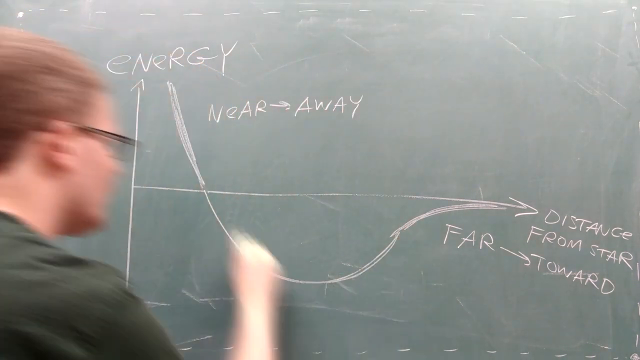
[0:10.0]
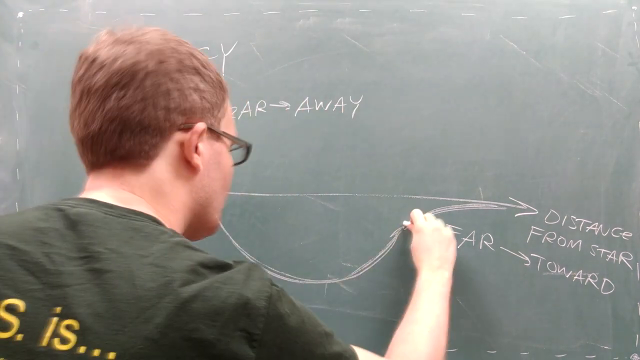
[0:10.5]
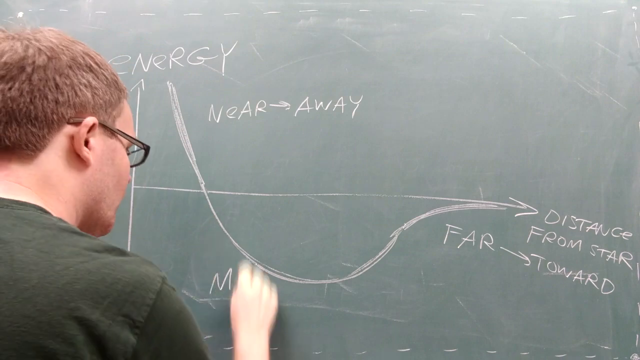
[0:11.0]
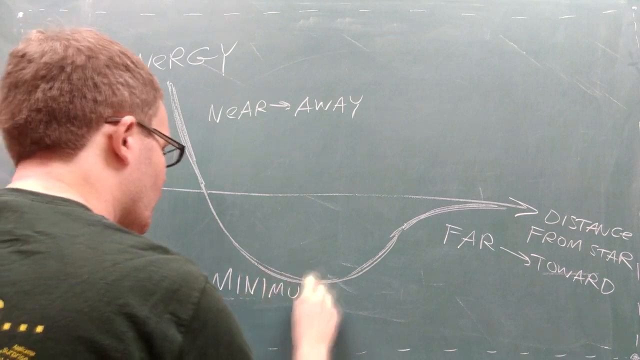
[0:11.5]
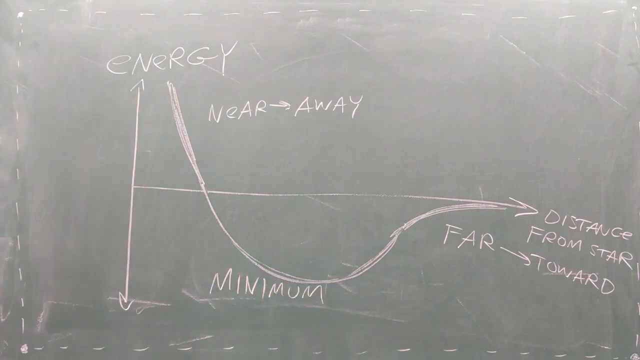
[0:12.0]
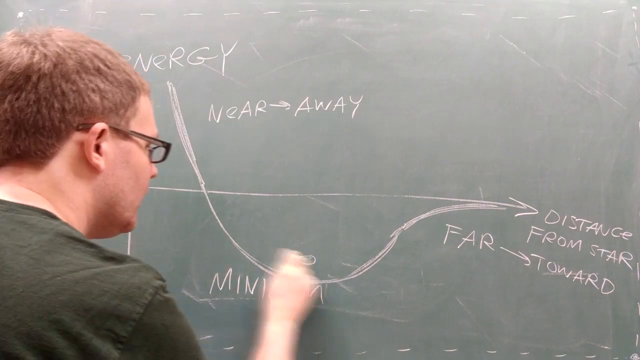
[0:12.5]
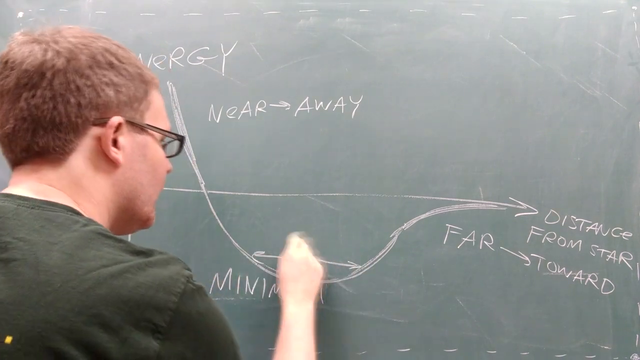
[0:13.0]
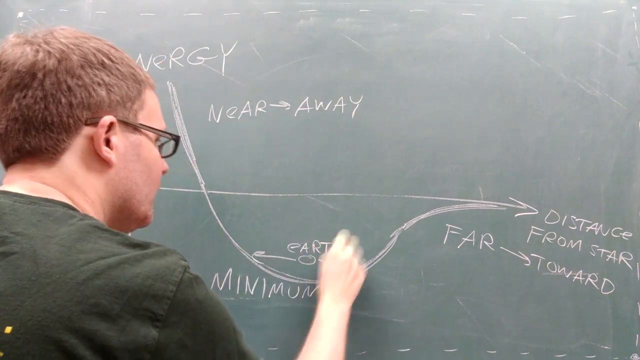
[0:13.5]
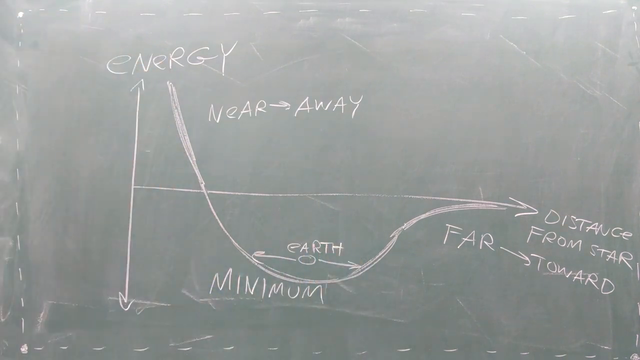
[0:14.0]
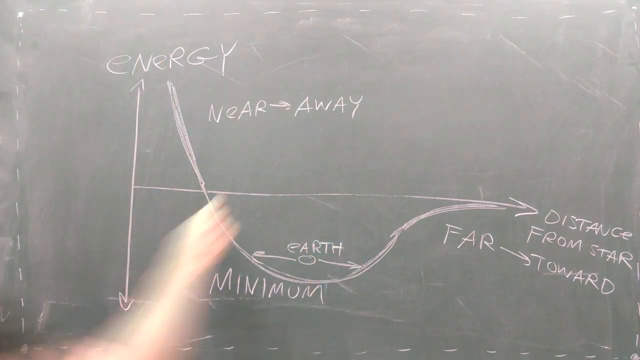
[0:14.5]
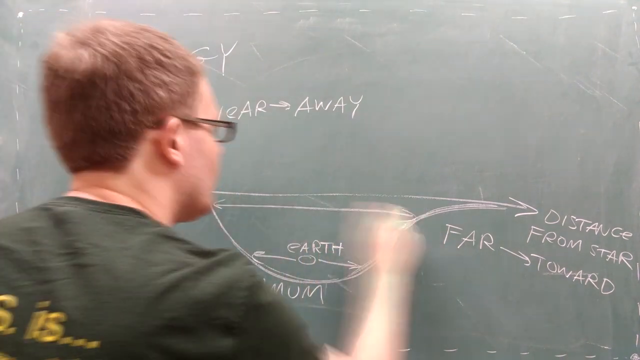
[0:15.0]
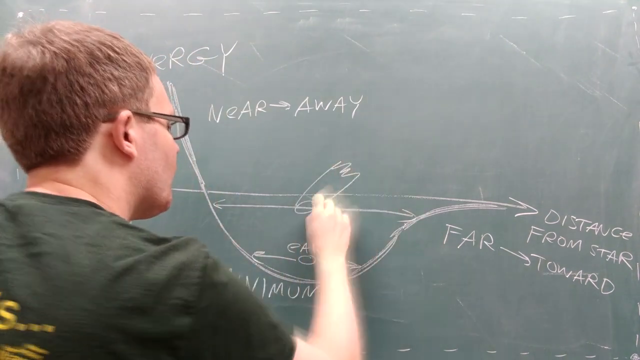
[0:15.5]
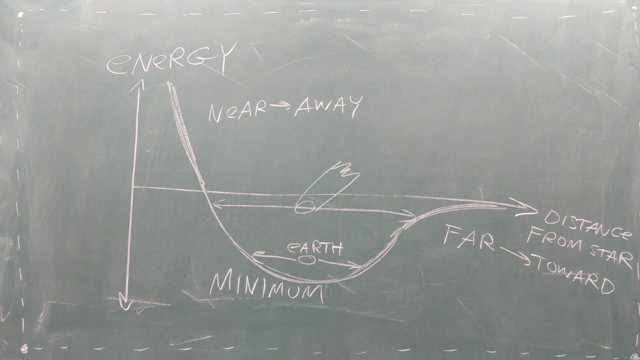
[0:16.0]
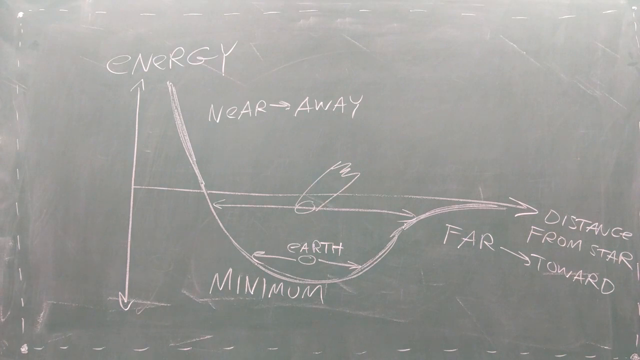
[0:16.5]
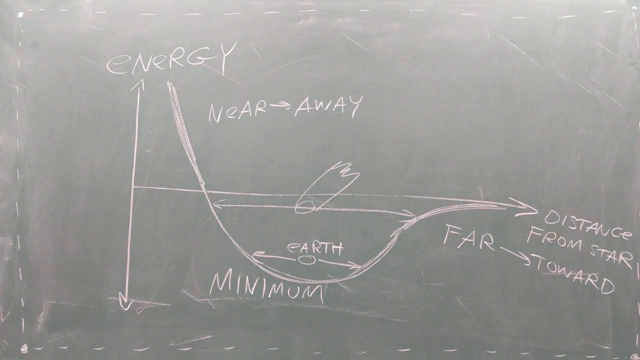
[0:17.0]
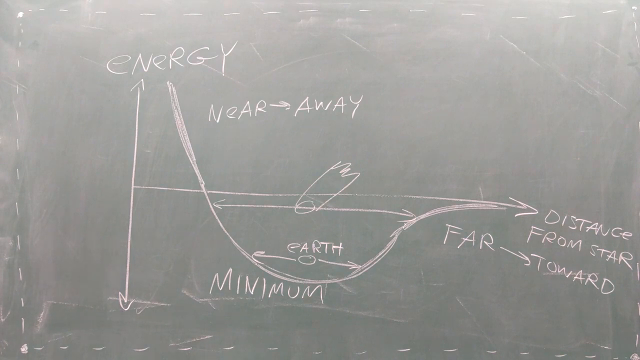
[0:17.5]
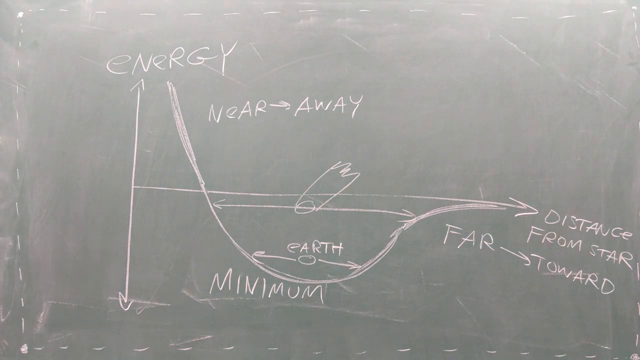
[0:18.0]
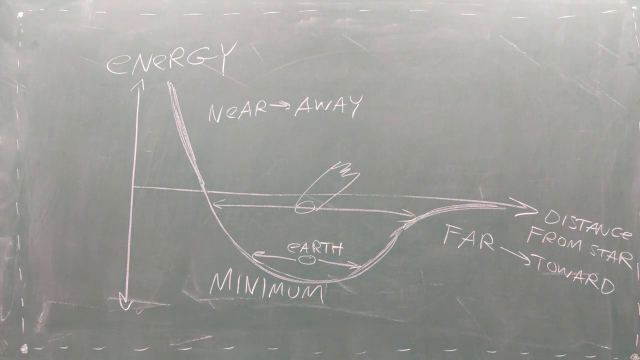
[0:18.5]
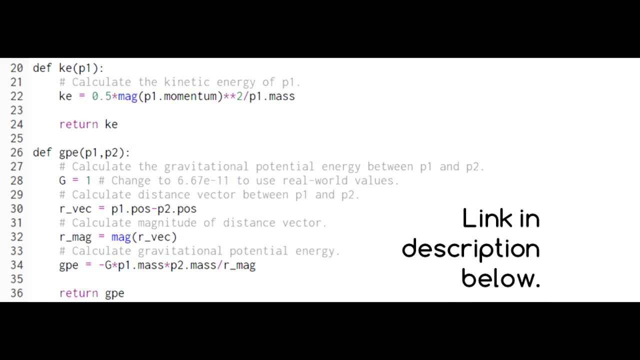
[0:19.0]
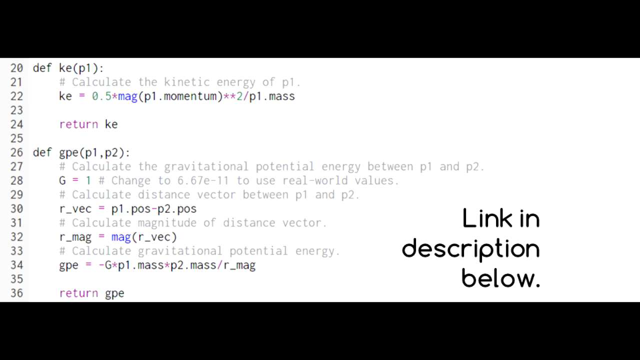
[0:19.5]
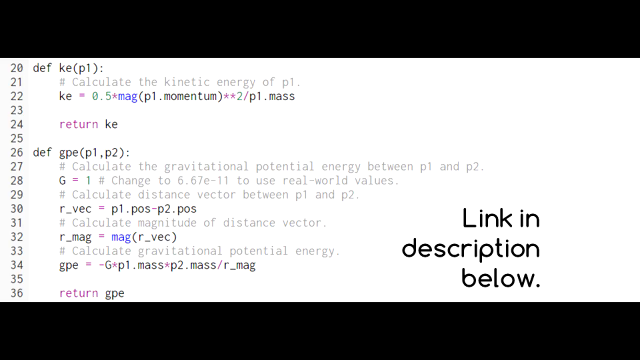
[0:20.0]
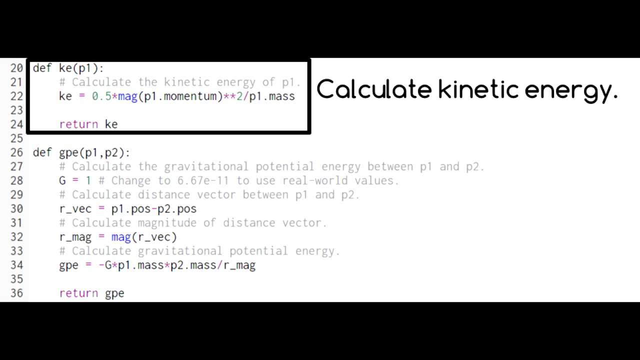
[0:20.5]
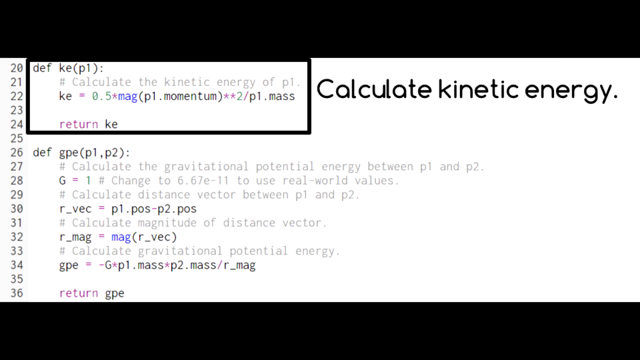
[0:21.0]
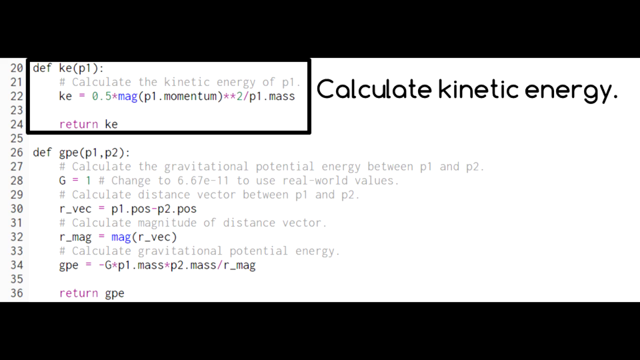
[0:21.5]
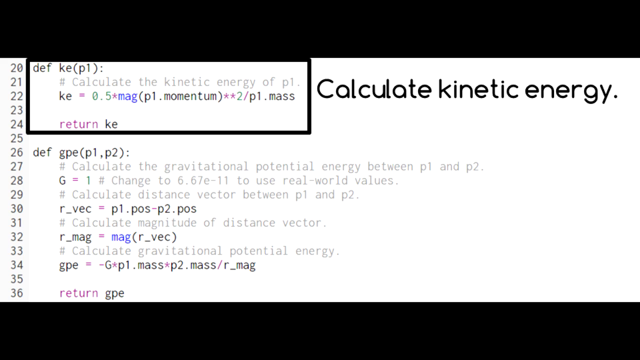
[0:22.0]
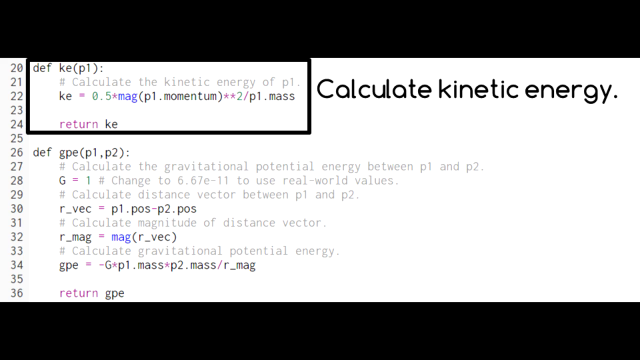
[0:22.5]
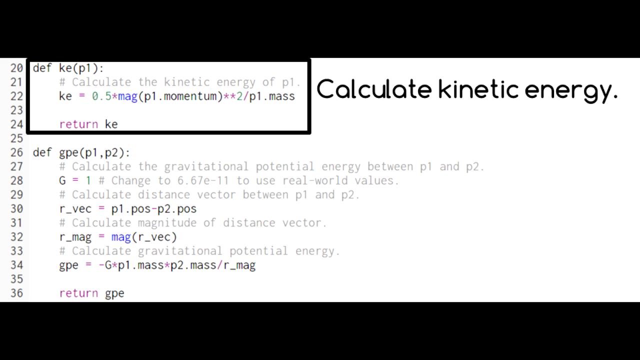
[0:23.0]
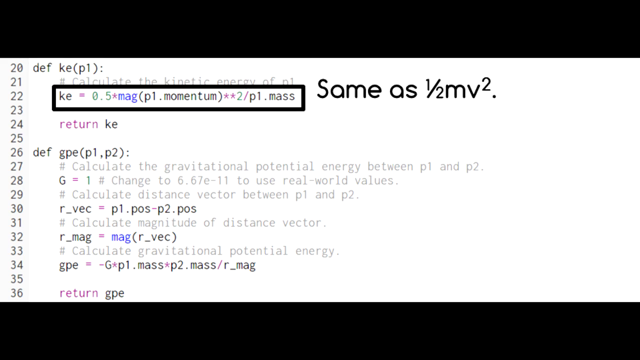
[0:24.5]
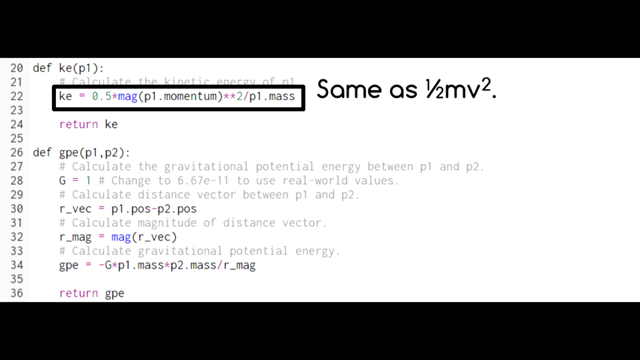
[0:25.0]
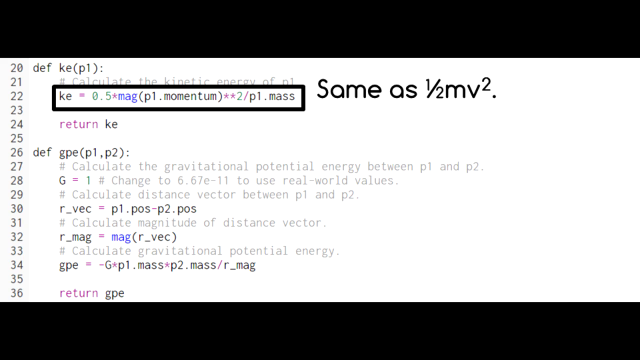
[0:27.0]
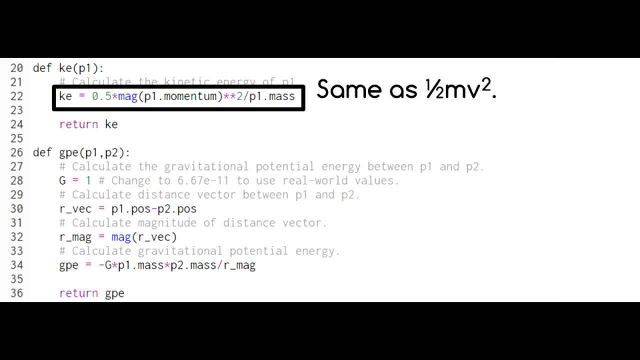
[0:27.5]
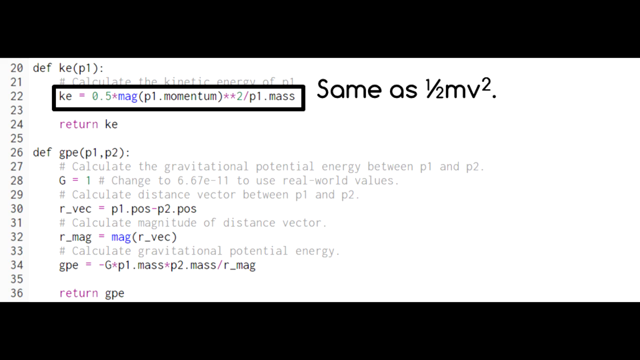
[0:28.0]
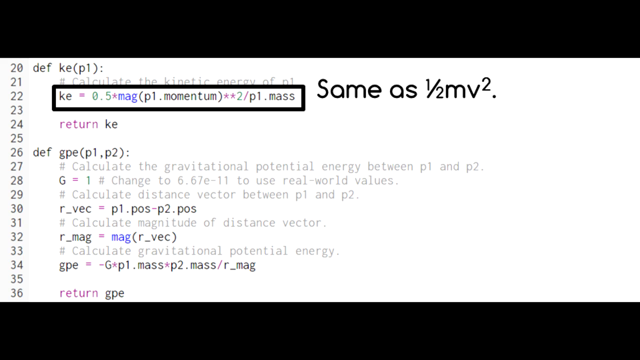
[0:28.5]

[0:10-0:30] The graph is labelled F, and underneath F is "minima". The man then moves to a screen of code. Its lines include "calculate the kinetic energy of the earth", "calculate the gravitational potential energy between P1 and P2", "calculate the distance vector between P1 and P2", "calculate the magnitude of distance vector", "calculate gravitational potential energy" and "calculate kinetic energy", with an expression for 1 over 2mv squared. The code shows the steps for calculating kinetic energy.